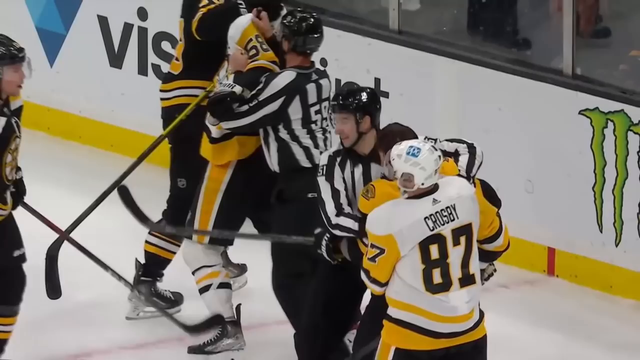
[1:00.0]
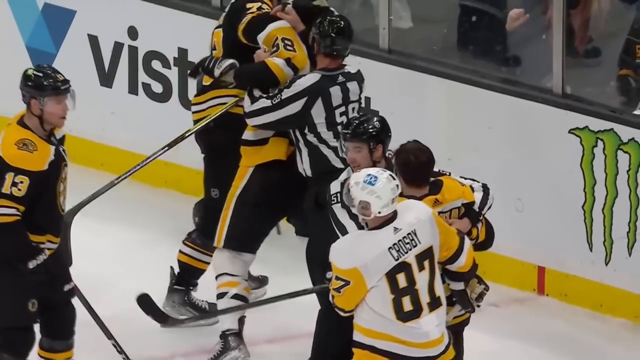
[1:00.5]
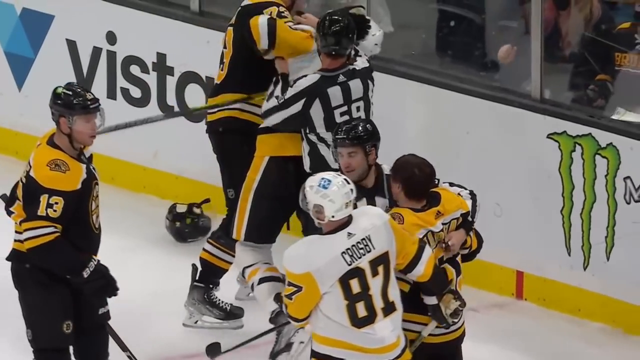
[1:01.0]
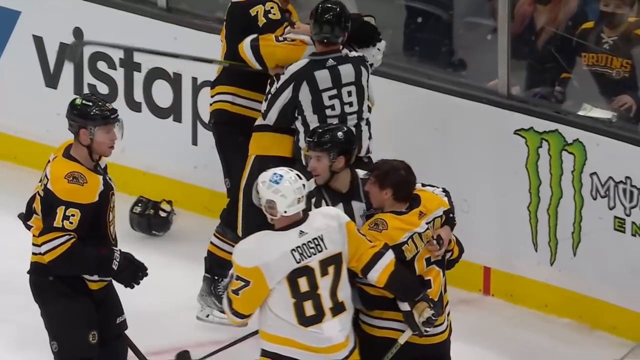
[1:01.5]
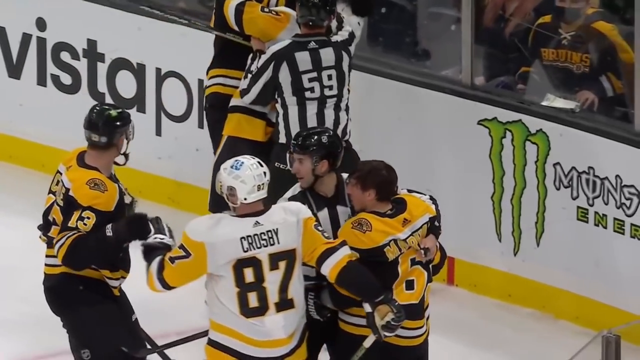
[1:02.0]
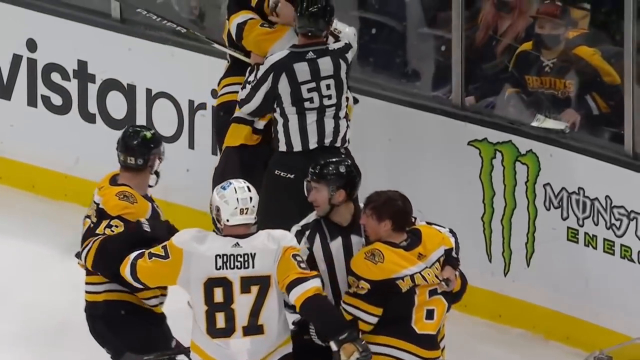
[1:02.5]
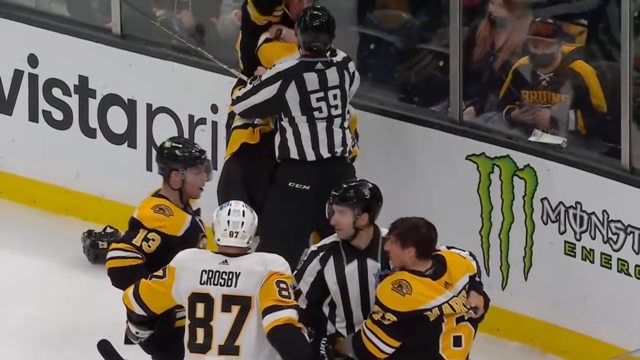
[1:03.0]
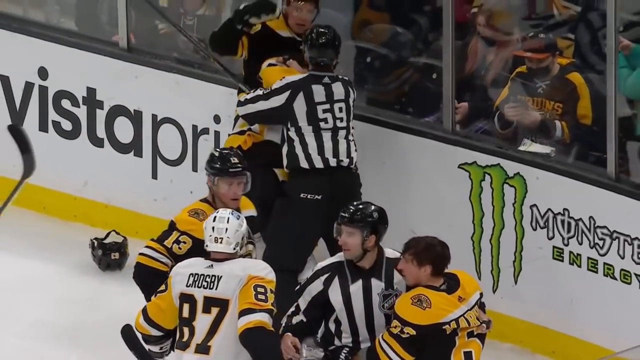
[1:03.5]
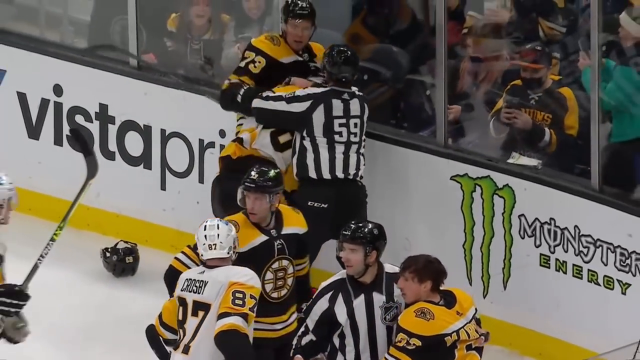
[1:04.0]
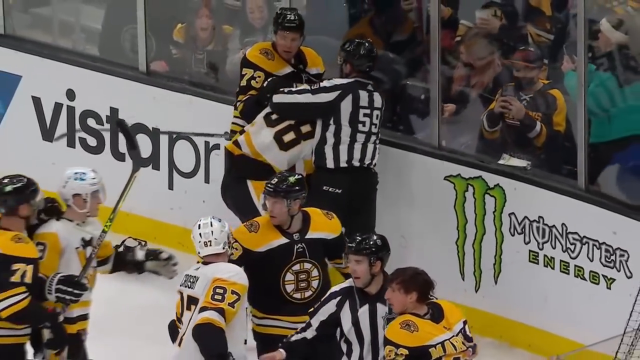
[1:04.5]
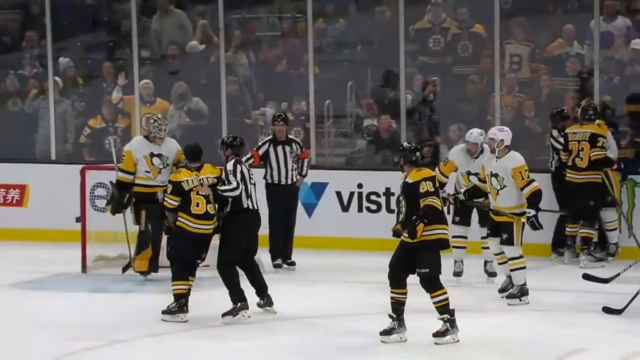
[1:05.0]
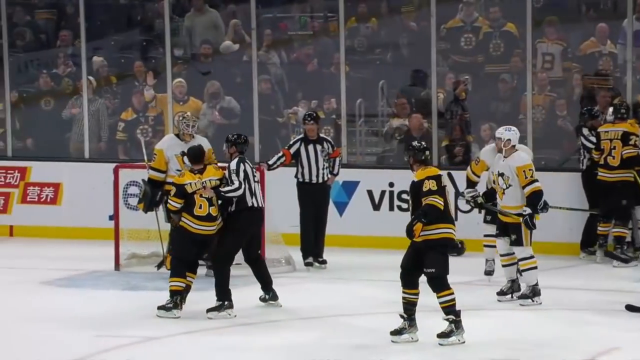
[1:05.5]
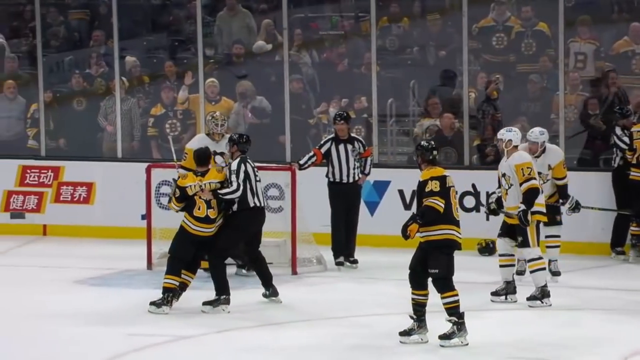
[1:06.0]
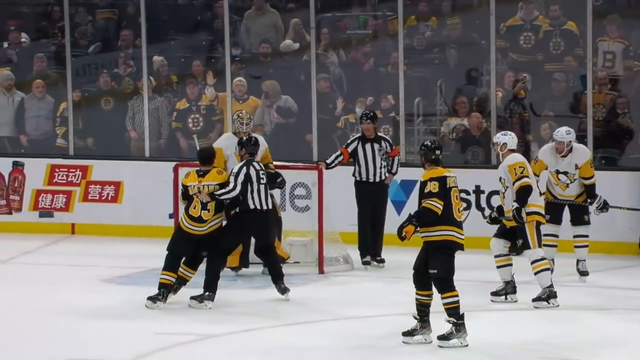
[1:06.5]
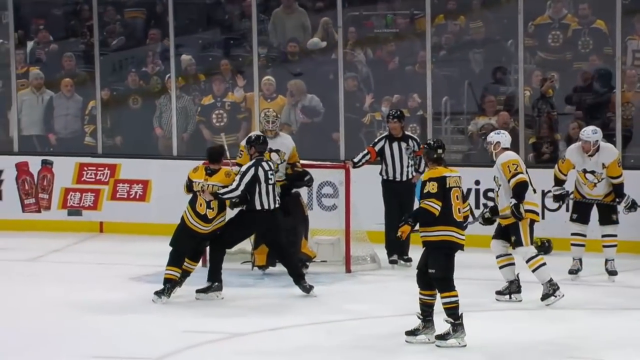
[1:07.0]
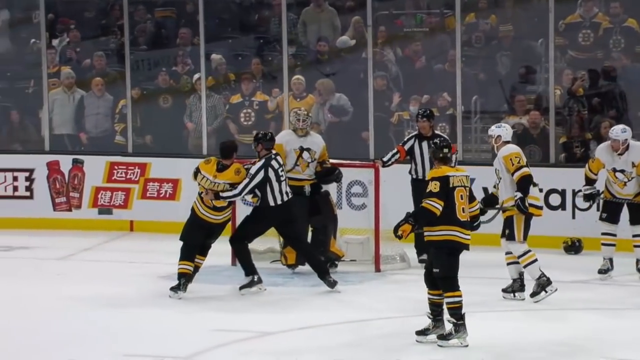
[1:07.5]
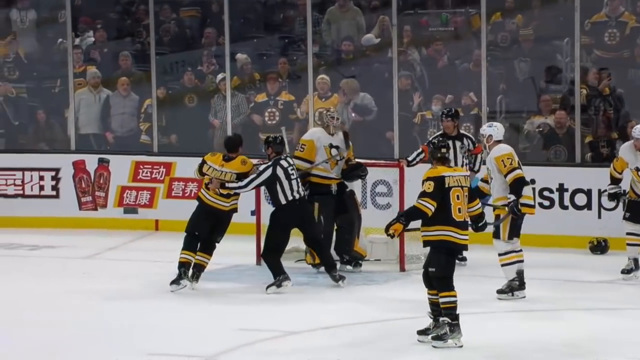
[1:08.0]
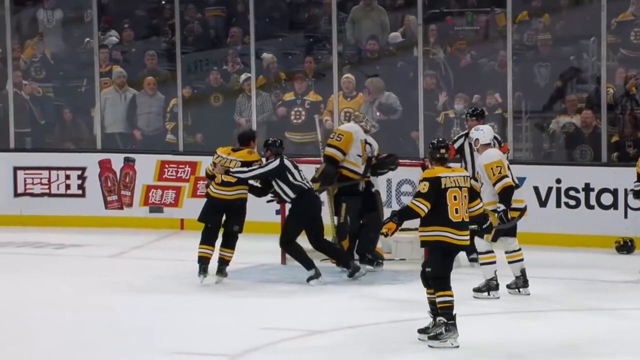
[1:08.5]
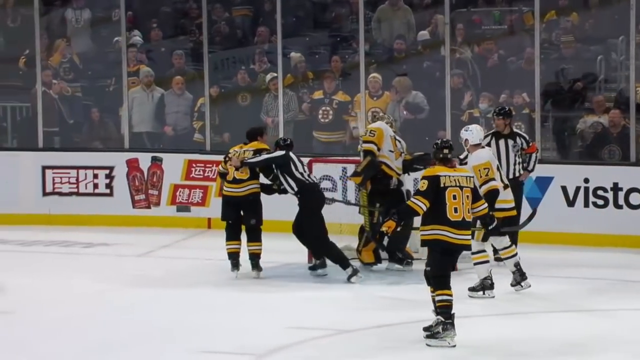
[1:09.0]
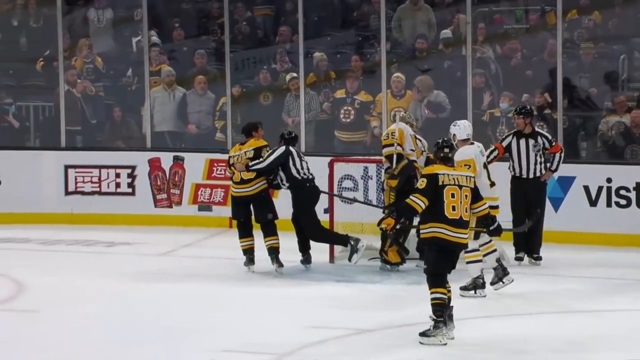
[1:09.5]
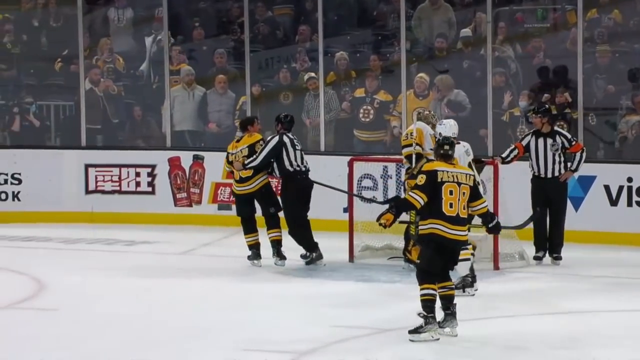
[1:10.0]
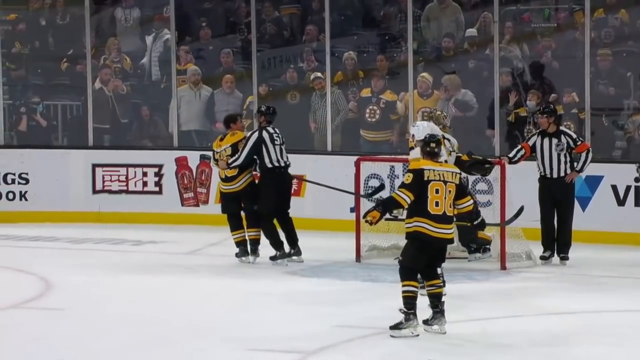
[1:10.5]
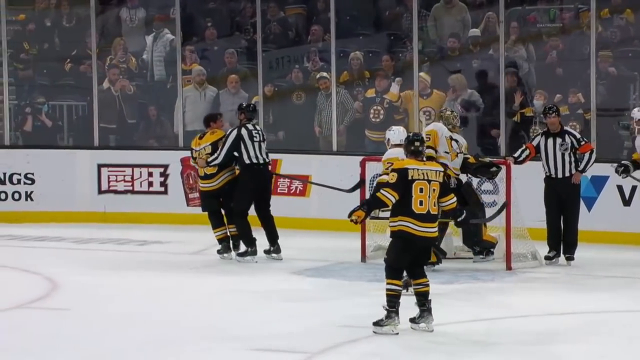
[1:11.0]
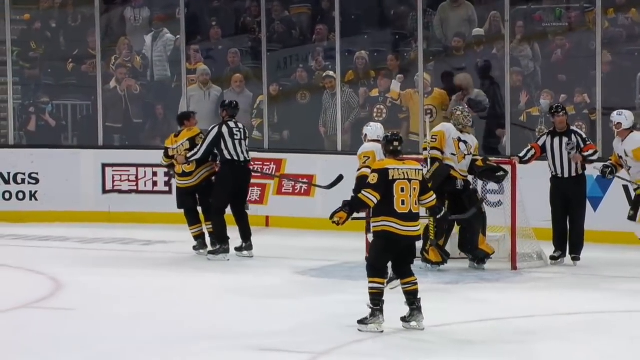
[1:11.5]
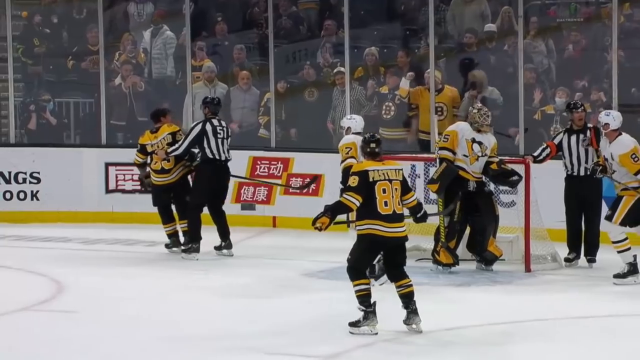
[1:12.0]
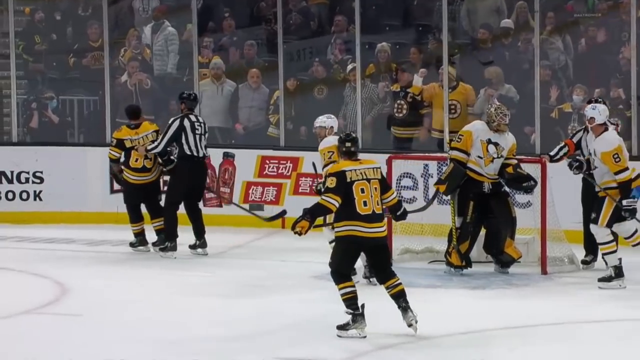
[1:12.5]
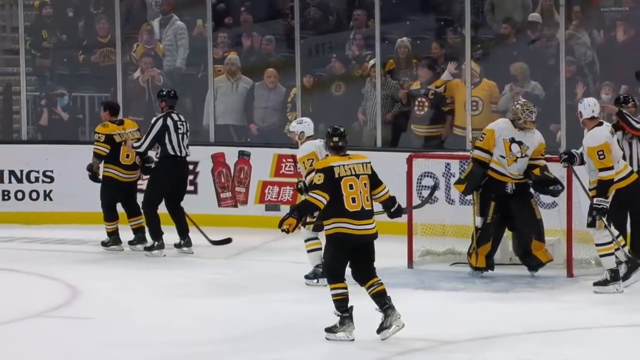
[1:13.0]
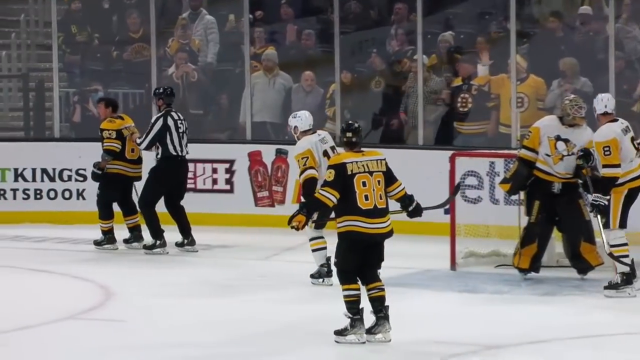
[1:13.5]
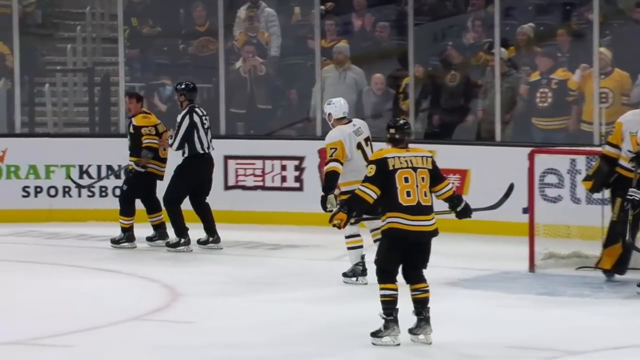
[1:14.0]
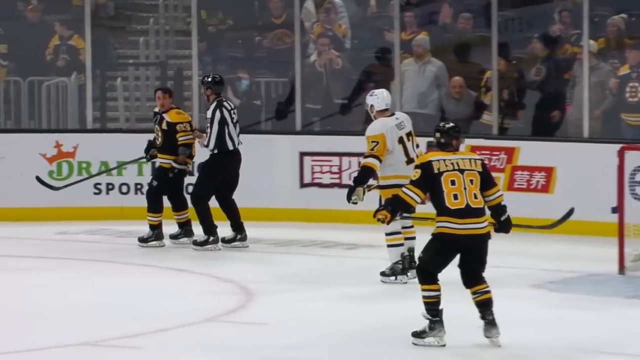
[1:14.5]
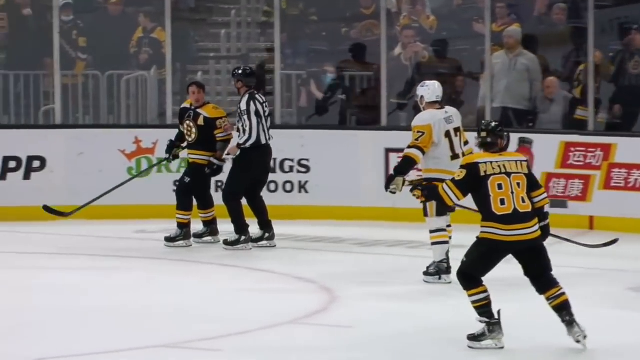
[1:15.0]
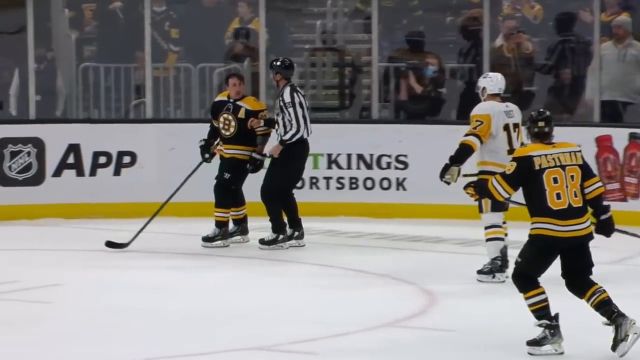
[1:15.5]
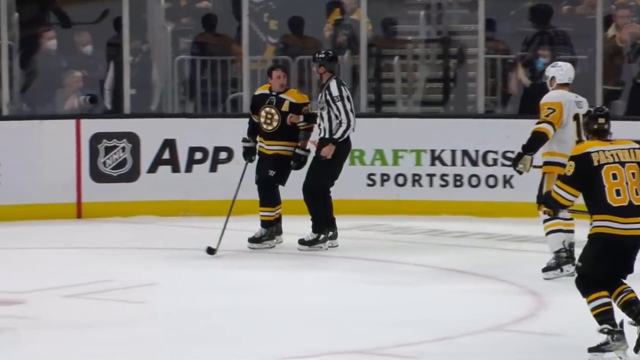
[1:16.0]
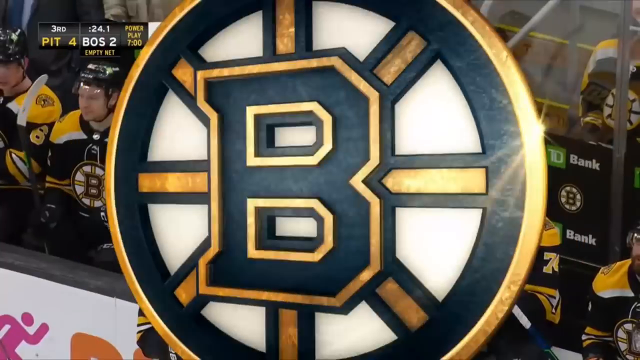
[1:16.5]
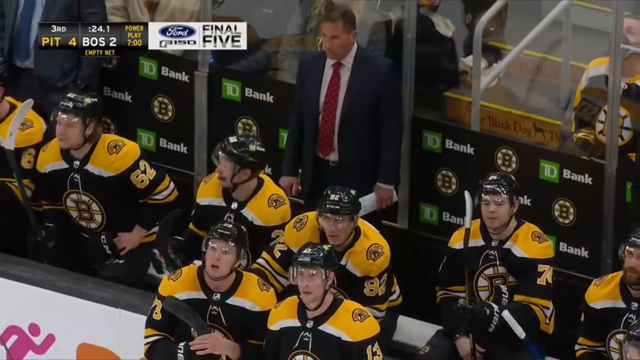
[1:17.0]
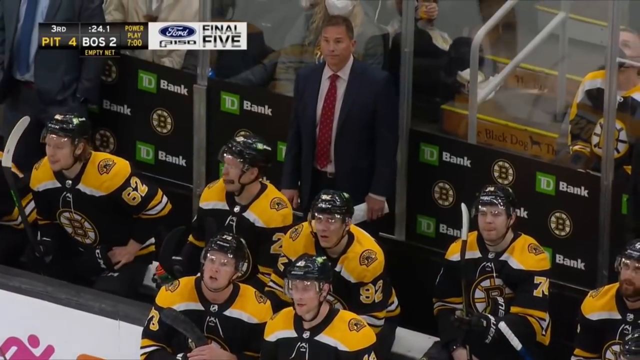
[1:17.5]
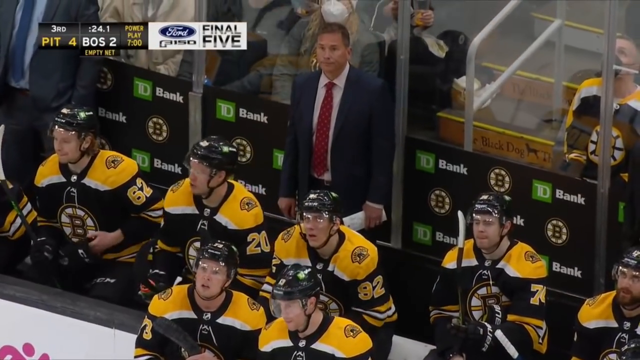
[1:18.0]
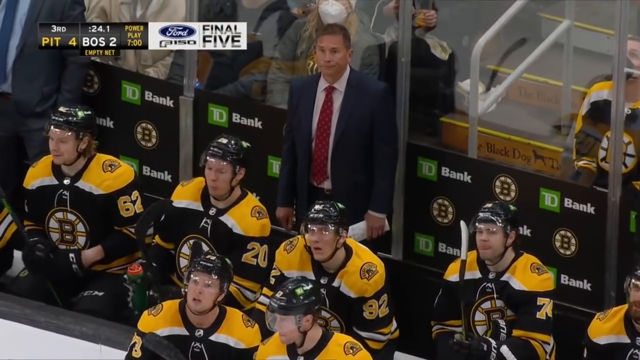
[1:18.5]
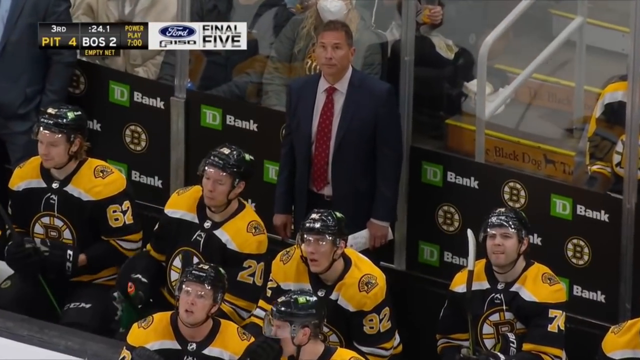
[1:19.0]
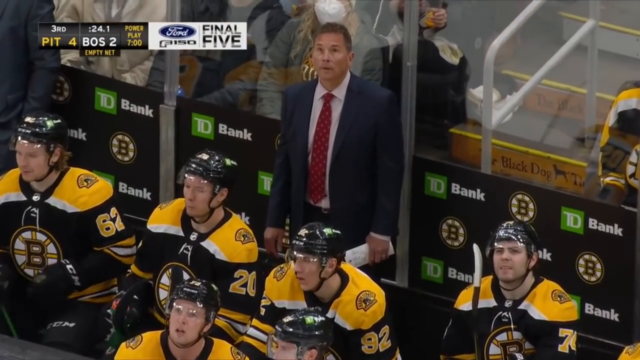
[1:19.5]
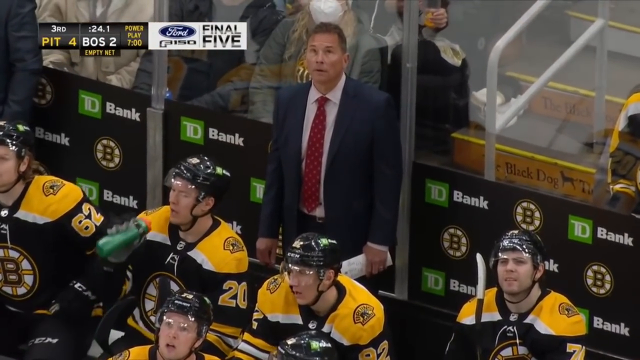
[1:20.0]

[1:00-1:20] Some players grab each other by the neck, and a referee tries to restrain player number 83 or 63. The video cuts to a man who appears to be the manager, wearing a white shirt, a blue suit jacket and a red spotty tie, holding a piece of paper in his left hand; this scene carries a sponsor whose name begins with ID. Fans are up against the plastic shield with their phones, trying to see what is happening. It appears that player number 63, Marchand, has struck the goalkeeper in the face with his stick. Afterward the clock seems to be frozen, with 24 seconds remaining in the quarter.